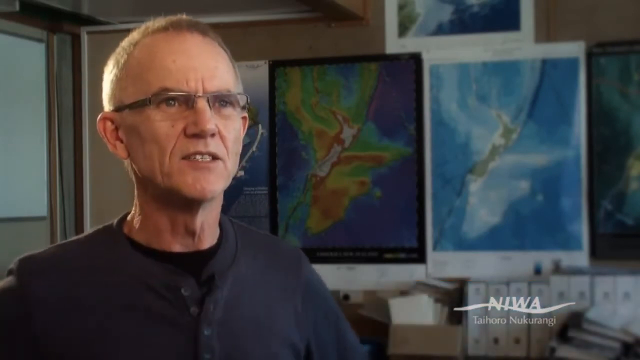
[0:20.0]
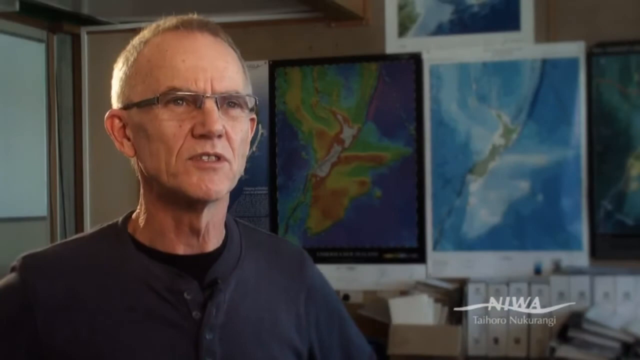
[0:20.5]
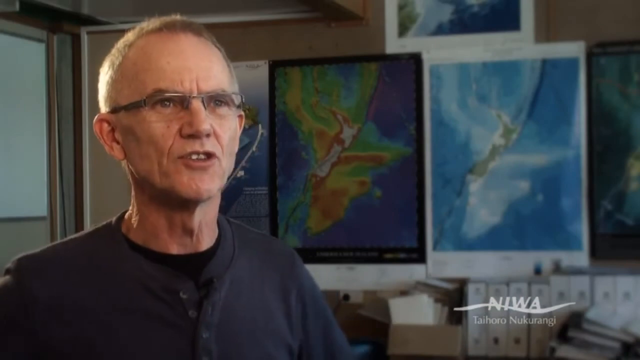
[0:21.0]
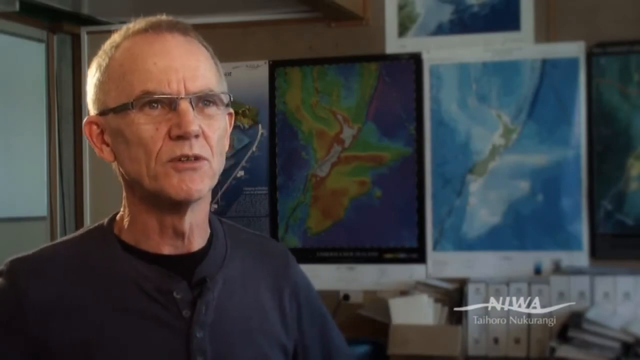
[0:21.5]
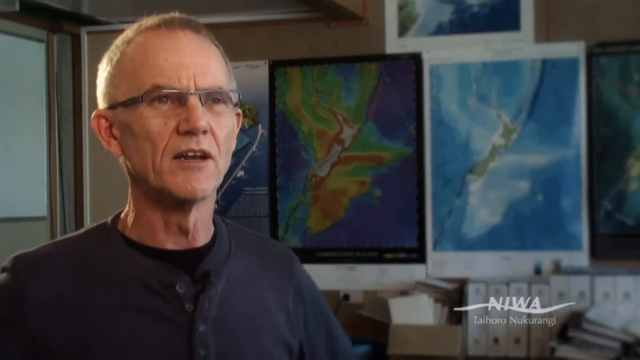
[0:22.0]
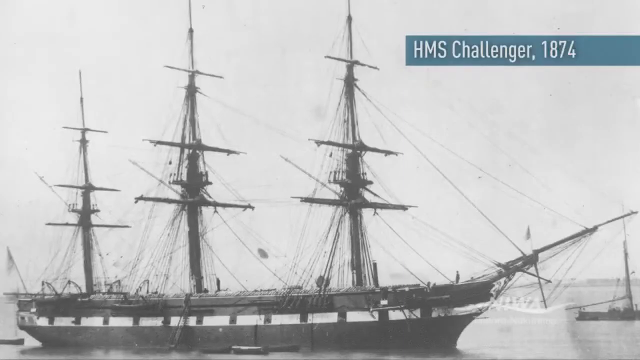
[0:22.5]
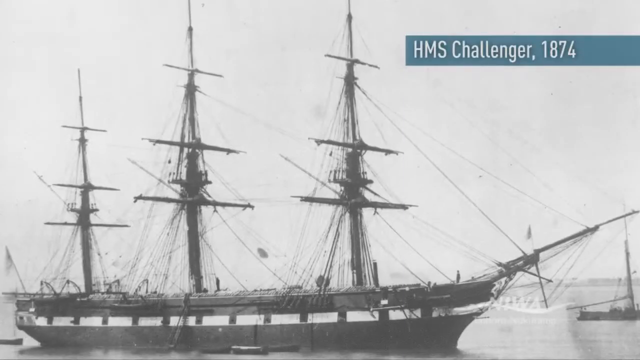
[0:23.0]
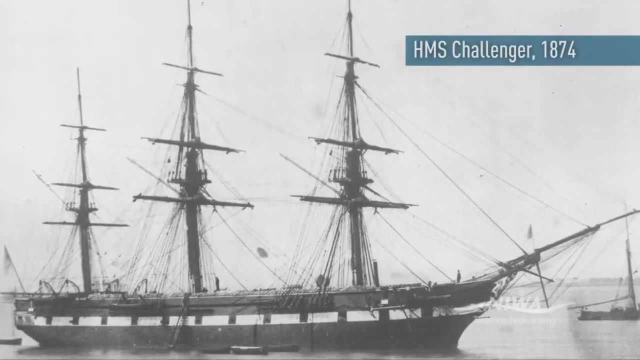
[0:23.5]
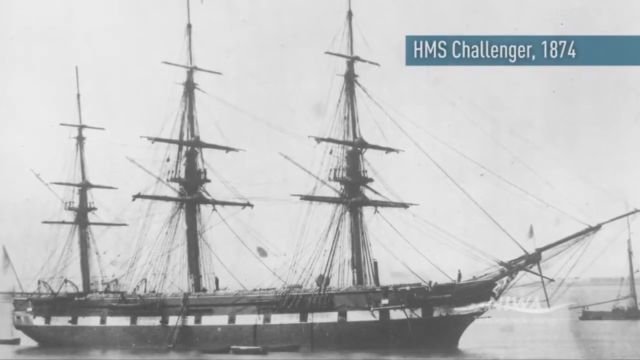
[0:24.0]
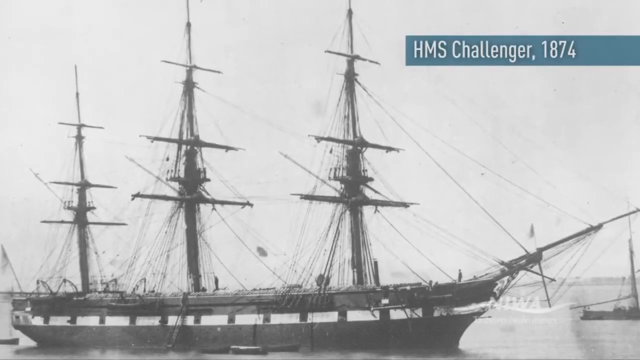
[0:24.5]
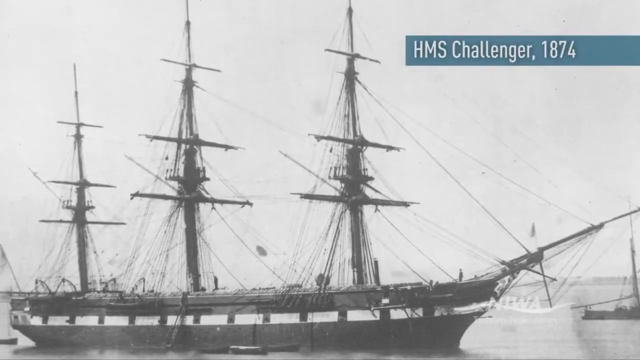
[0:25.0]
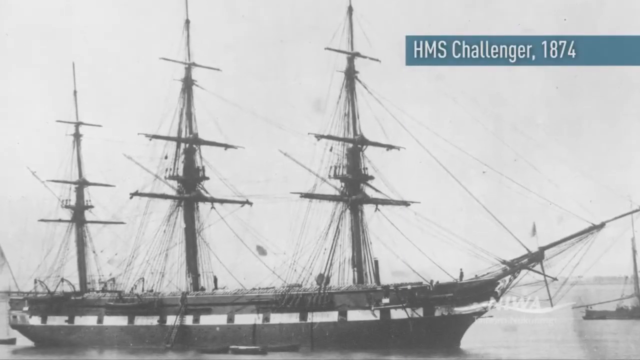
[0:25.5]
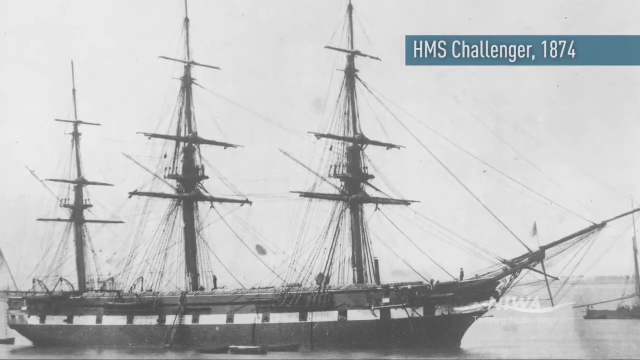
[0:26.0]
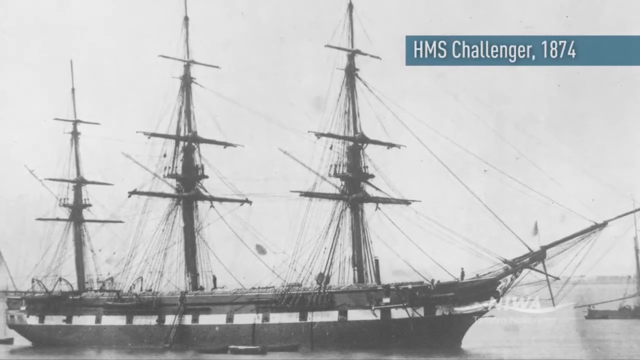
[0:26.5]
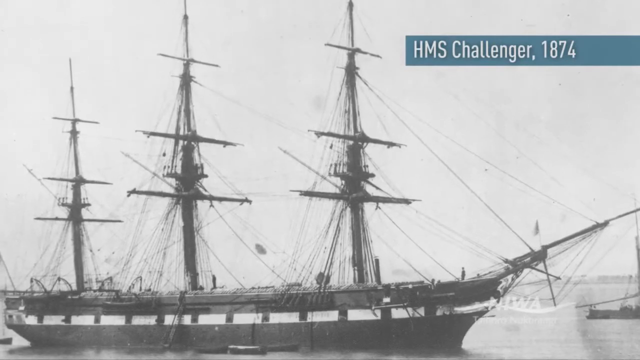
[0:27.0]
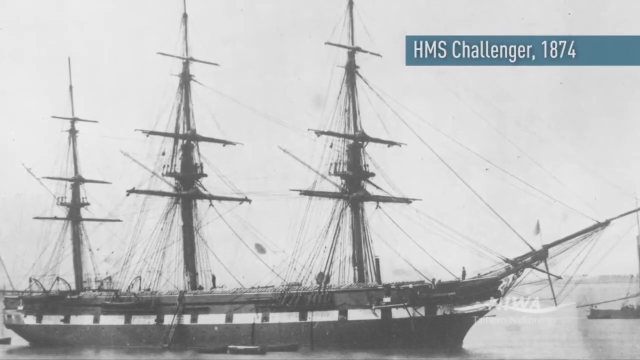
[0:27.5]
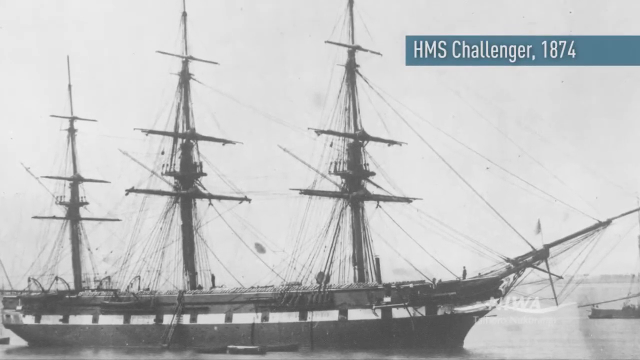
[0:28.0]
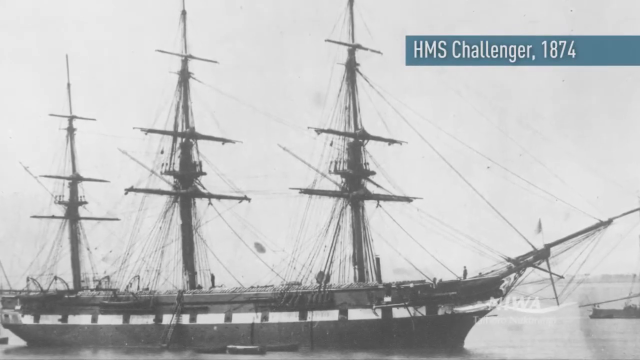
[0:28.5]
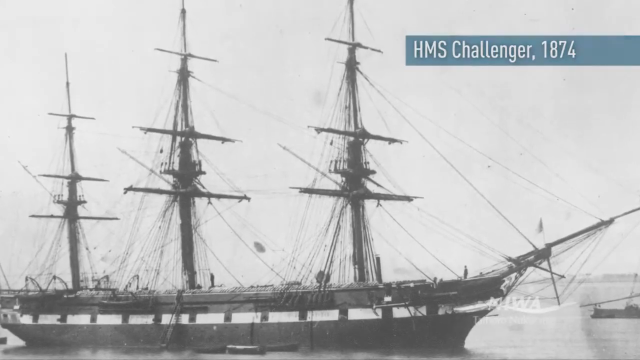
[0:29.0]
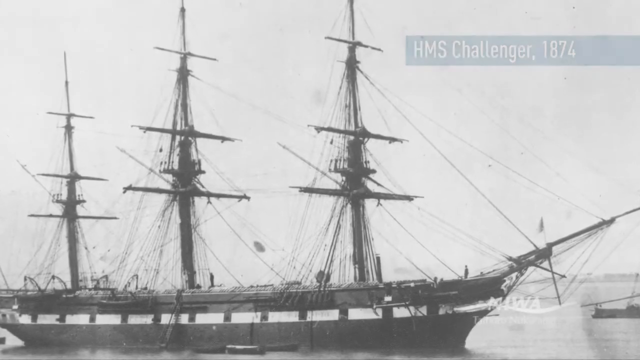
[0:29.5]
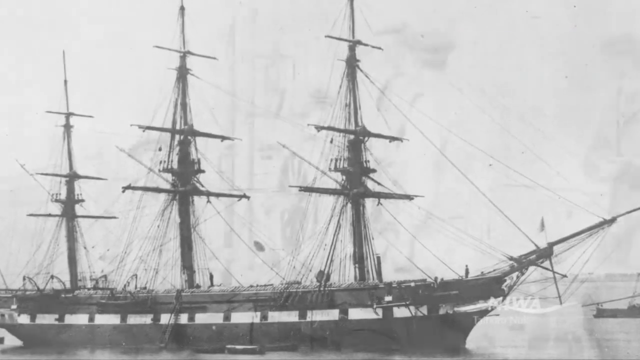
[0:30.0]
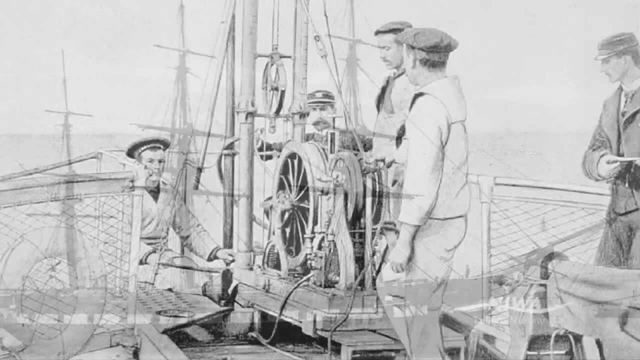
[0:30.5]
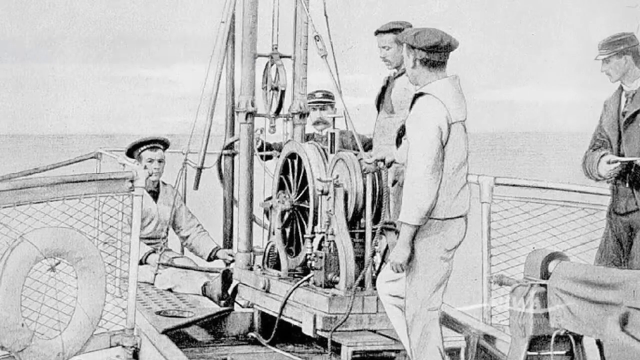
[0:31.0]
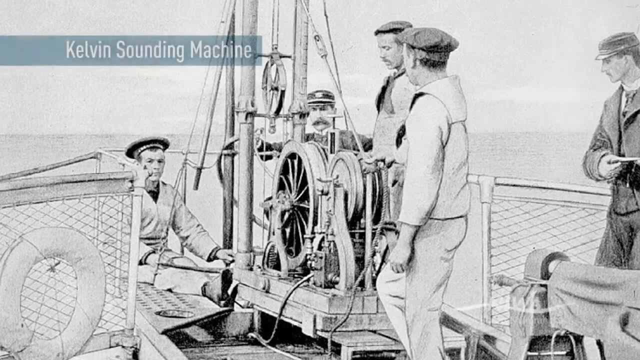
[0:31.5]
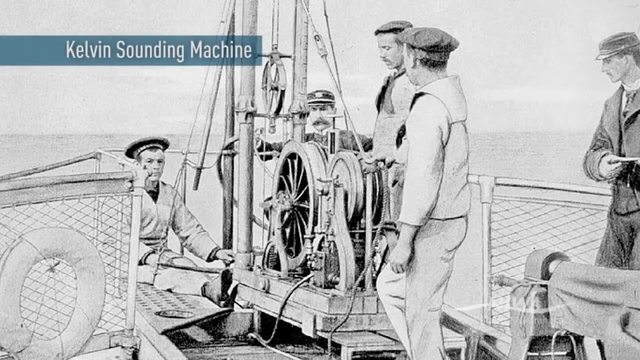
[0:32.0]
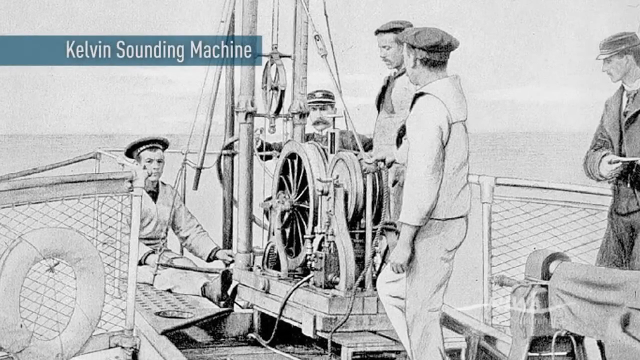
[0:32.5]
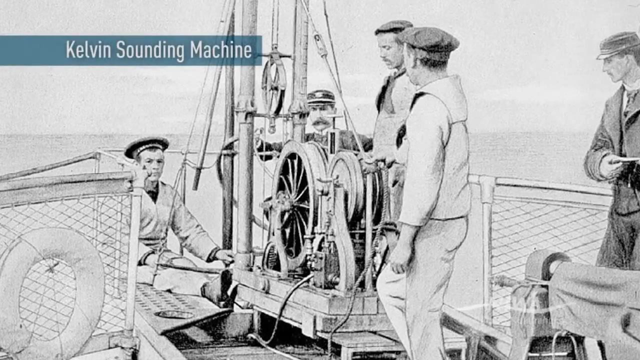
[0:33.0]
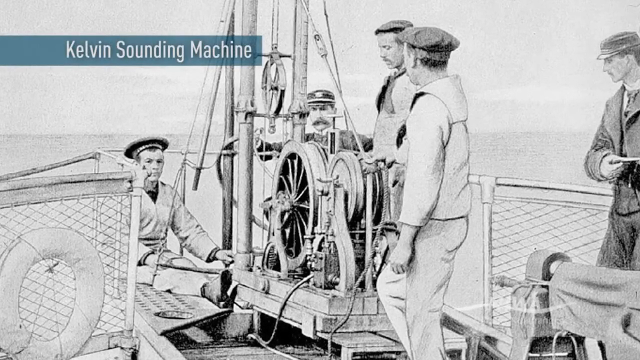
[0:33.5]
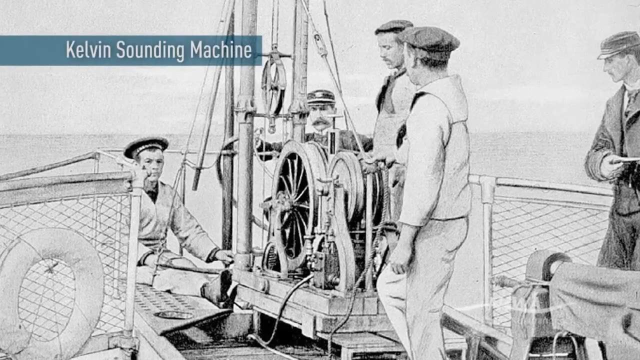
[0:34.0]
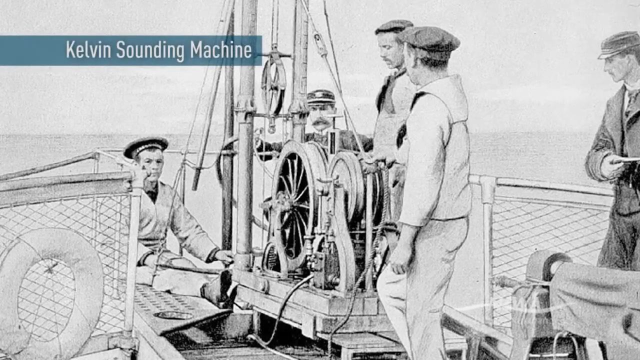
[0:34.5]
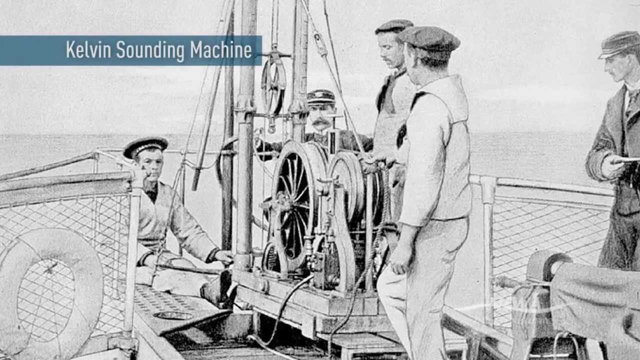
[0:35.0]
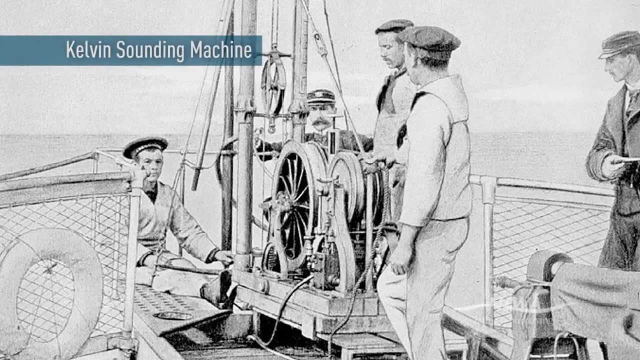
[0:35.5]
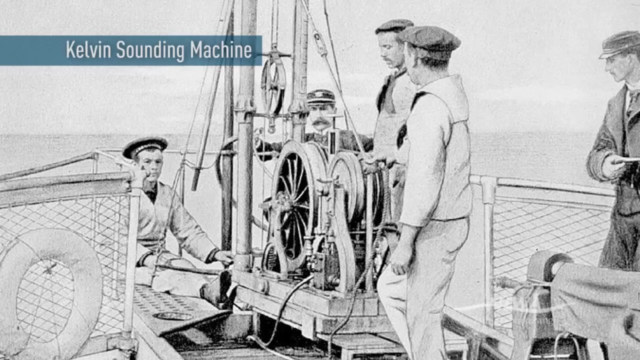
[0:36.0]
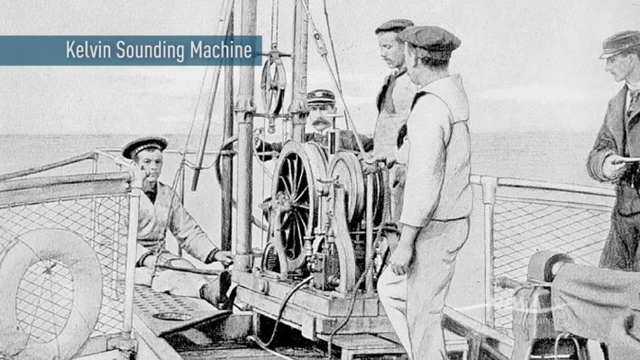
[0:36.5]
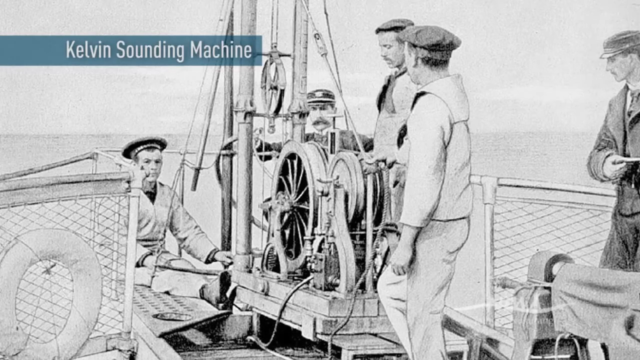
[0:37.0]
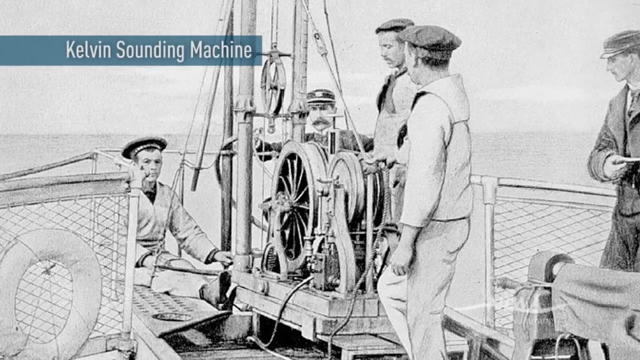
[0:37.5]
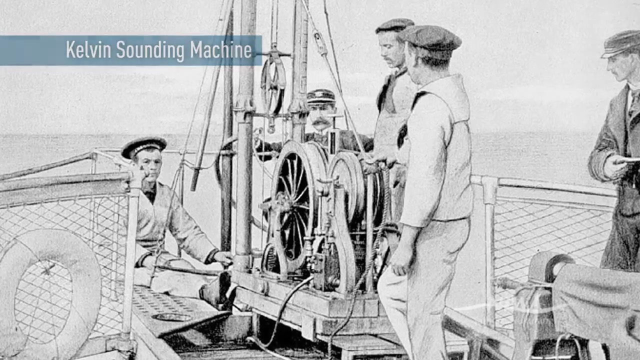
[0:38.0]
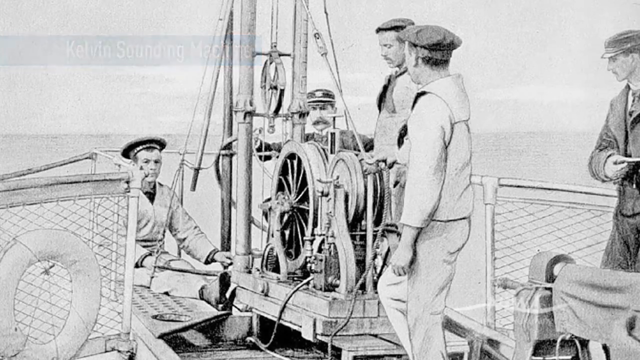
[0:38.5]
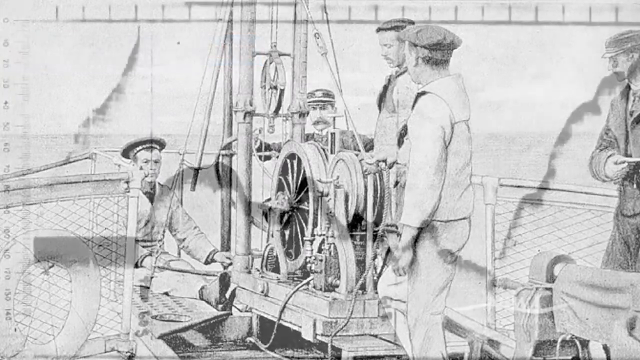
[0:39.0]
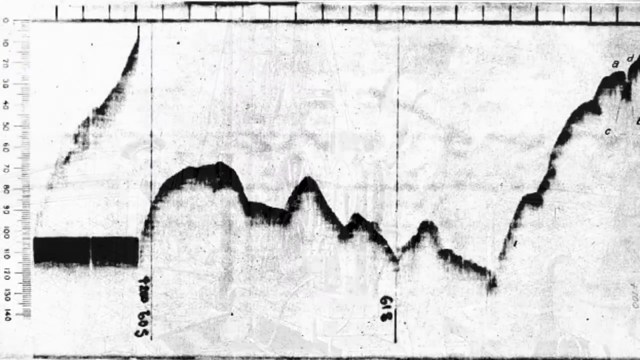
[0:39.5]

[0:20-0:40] A man speaks to the camera. He is Caucasian and probably in his mid to late 50s, with short, receding hair and glasses, and wears a dark navy or black t-shirt. He sits on the left-hand side of the screen. To the right-hand side of the screen and behind him on the wall are various aerial images of New Zealand. The next shot shows an old photo of a sailing vessel; text on the image shows the boat is named HMS Challenger and the photo is from 1874. The boat has three tall masts, and none of the sails are down. Next comes a still image of five sailors working around a piece of equipment, which a caption on the image identifies as a Kelvin-sounding machine. The men wear different clothing, probably denoting different stations or ranks on the boat. Two of the sailors, one immediately behind the machine and one on the right-hand side of the shot, have dark uniforms and hats, while the other three have light or white uniforms with a dark hat.